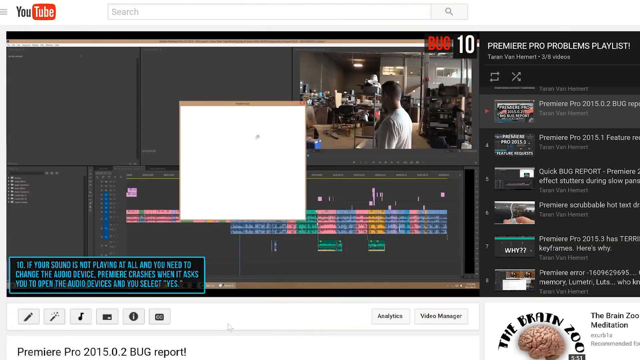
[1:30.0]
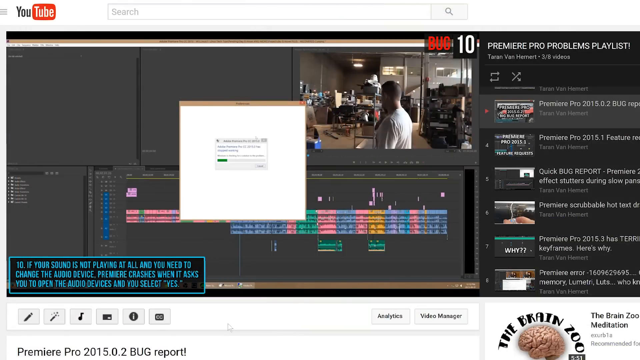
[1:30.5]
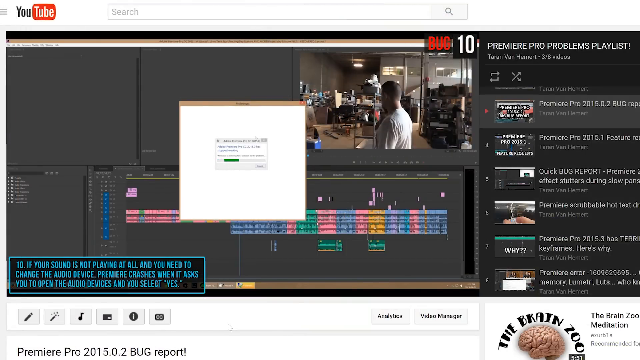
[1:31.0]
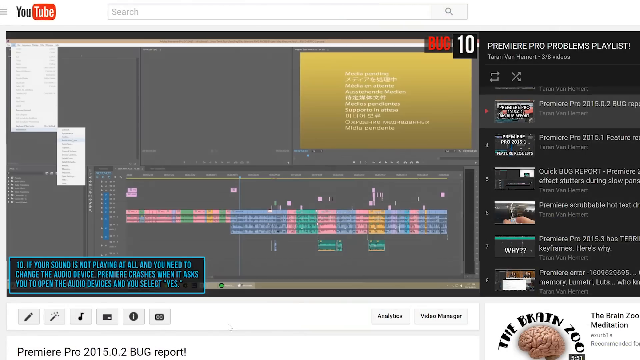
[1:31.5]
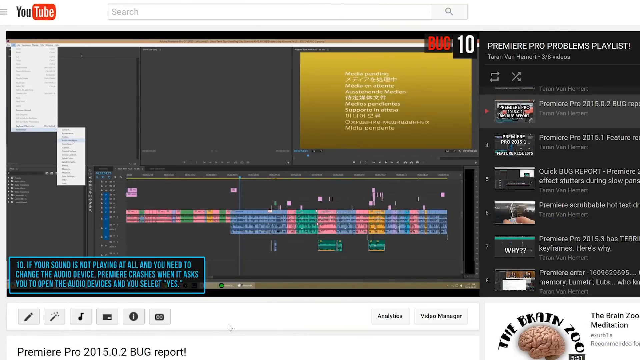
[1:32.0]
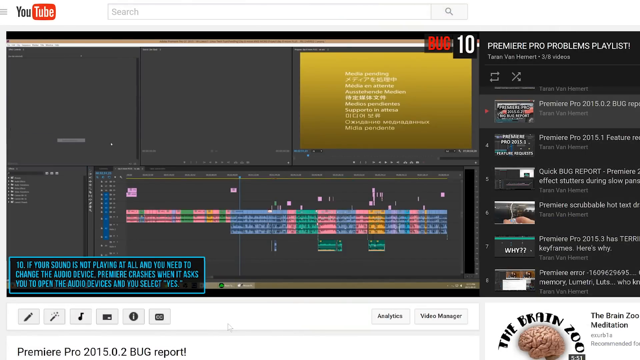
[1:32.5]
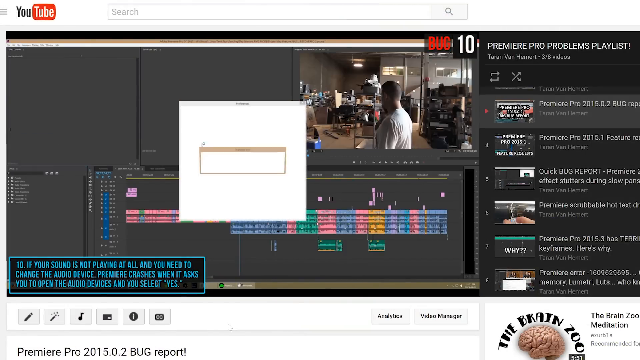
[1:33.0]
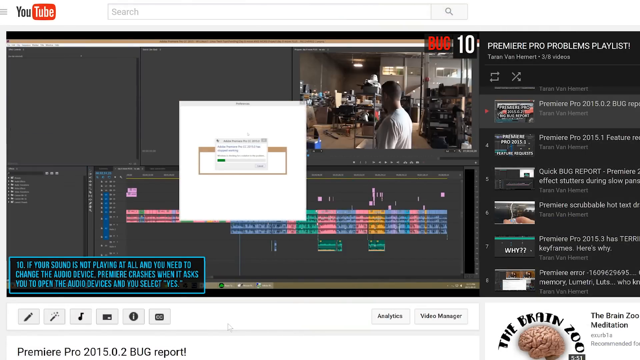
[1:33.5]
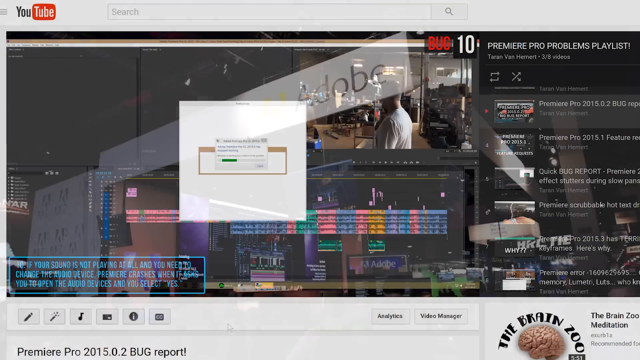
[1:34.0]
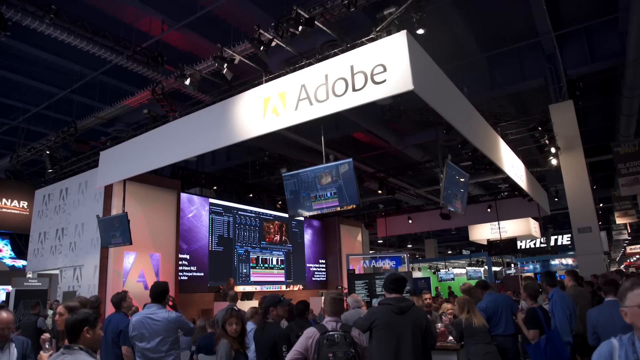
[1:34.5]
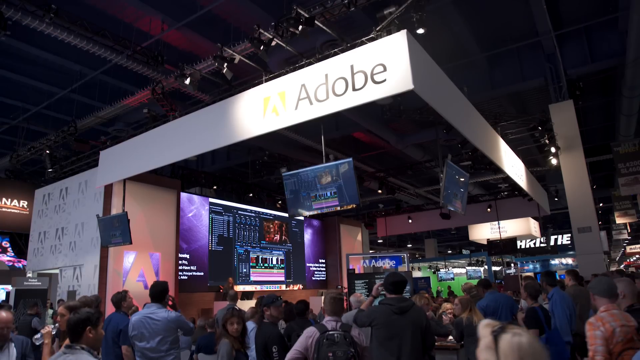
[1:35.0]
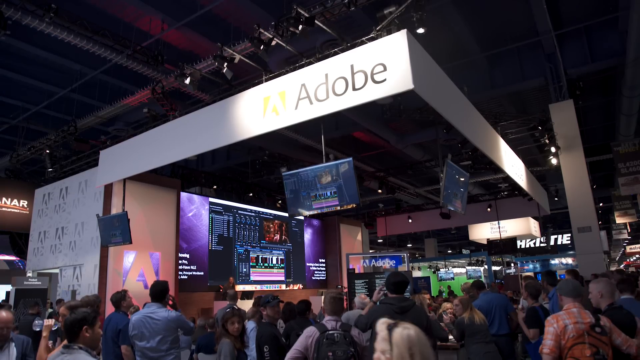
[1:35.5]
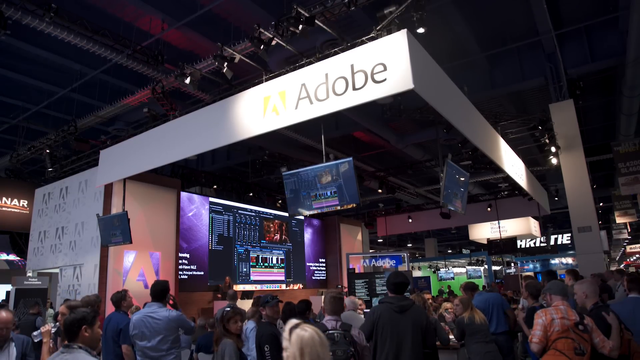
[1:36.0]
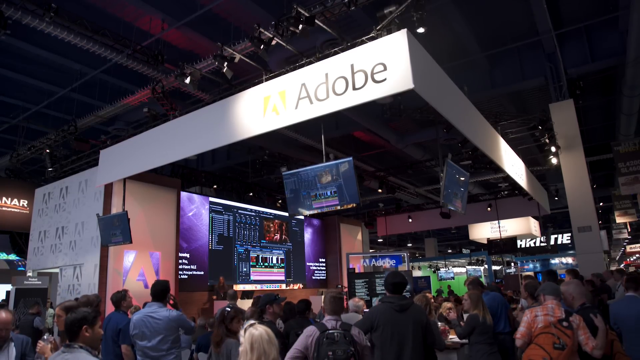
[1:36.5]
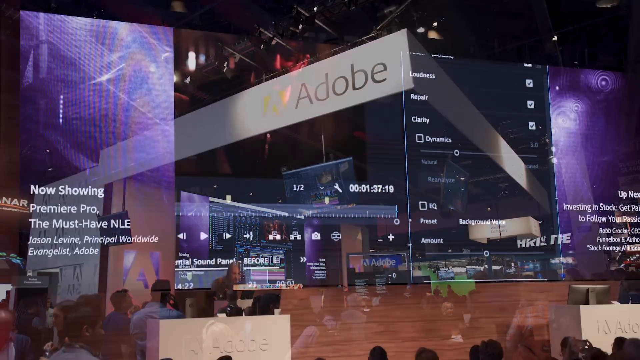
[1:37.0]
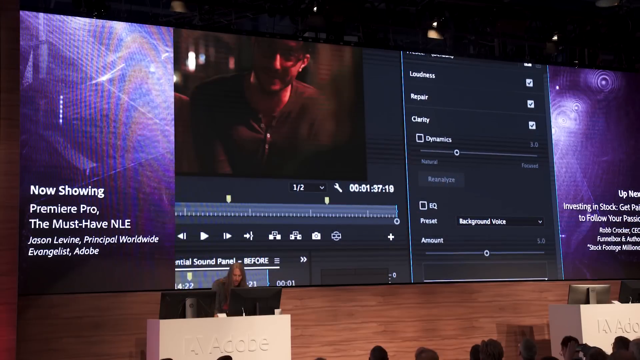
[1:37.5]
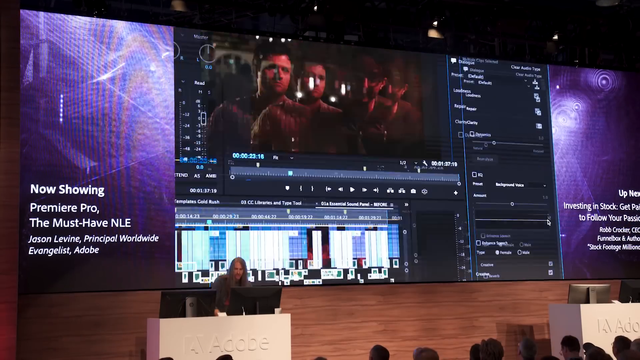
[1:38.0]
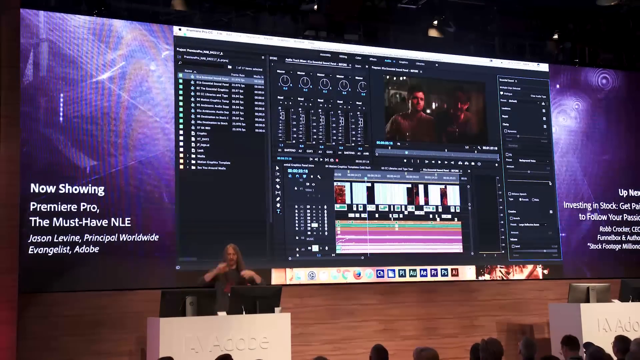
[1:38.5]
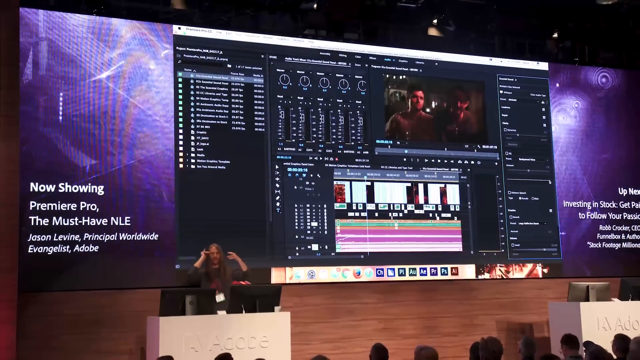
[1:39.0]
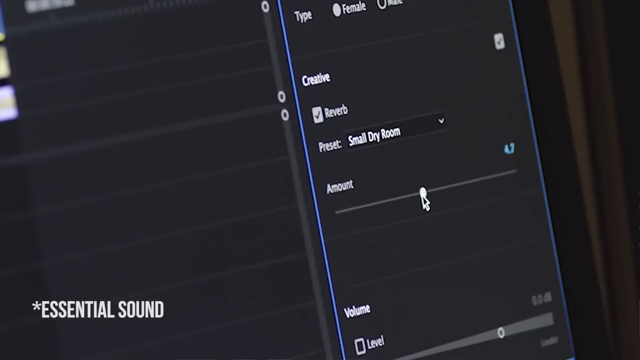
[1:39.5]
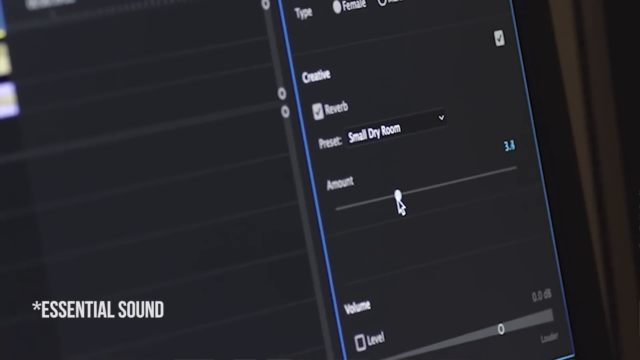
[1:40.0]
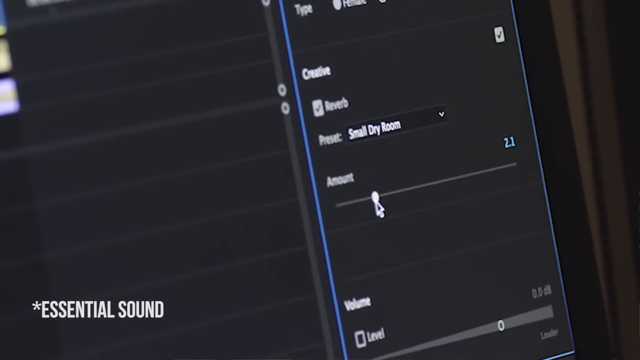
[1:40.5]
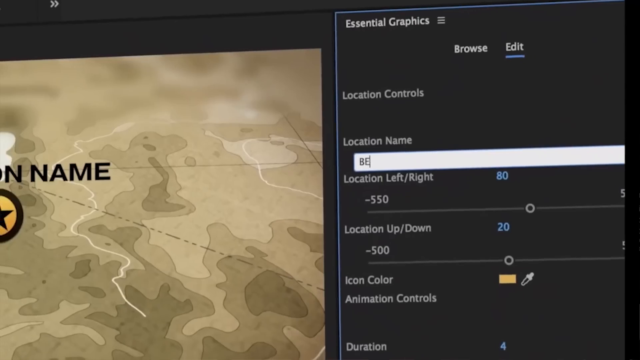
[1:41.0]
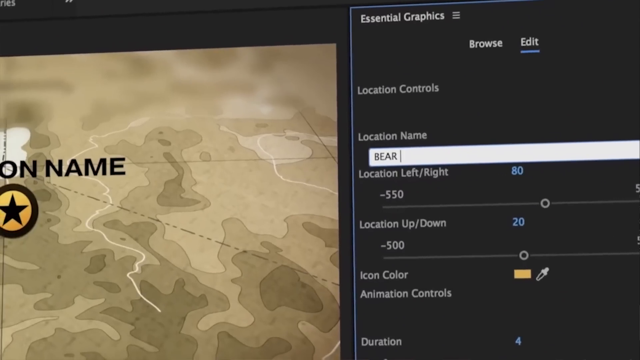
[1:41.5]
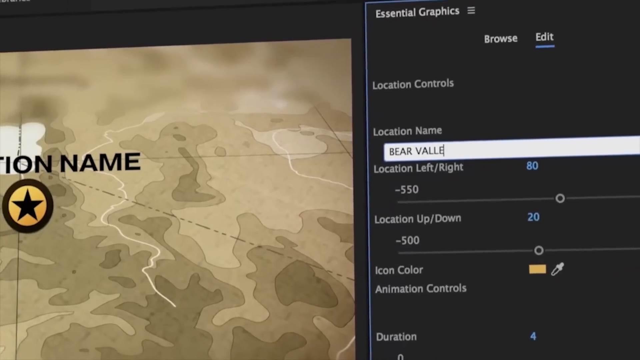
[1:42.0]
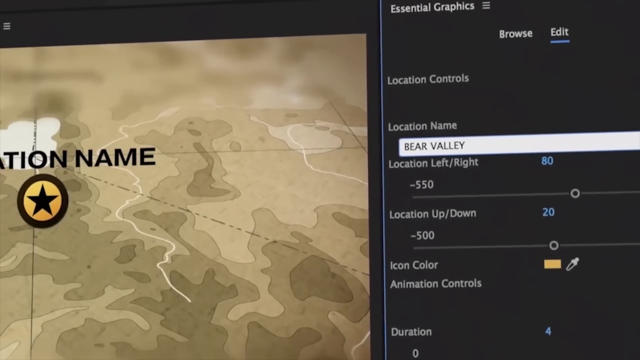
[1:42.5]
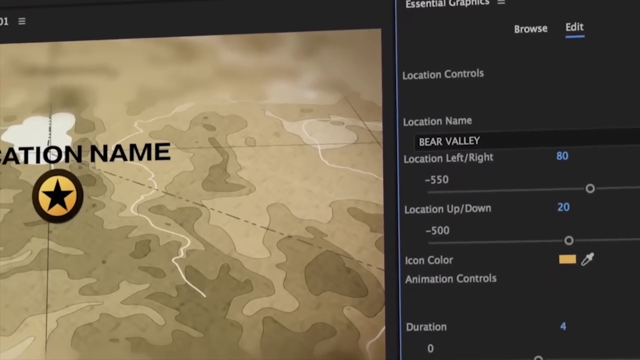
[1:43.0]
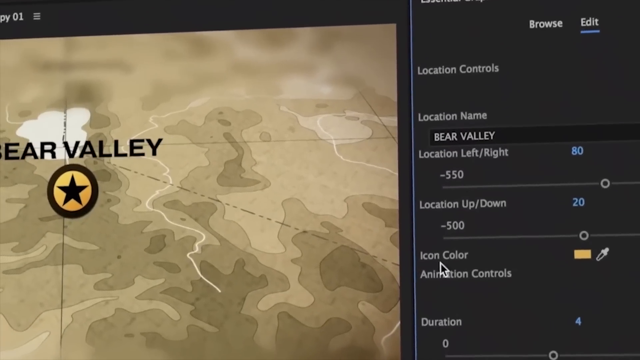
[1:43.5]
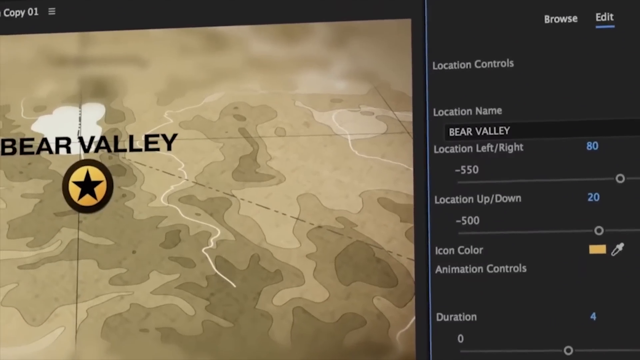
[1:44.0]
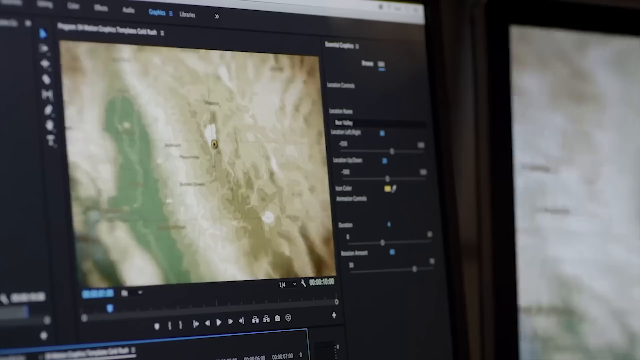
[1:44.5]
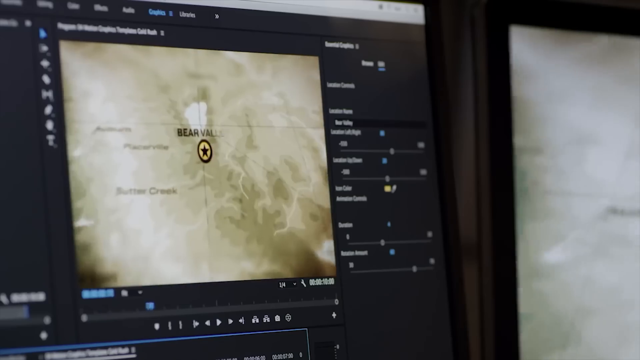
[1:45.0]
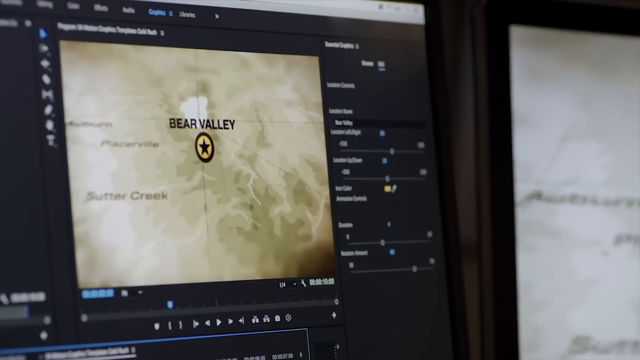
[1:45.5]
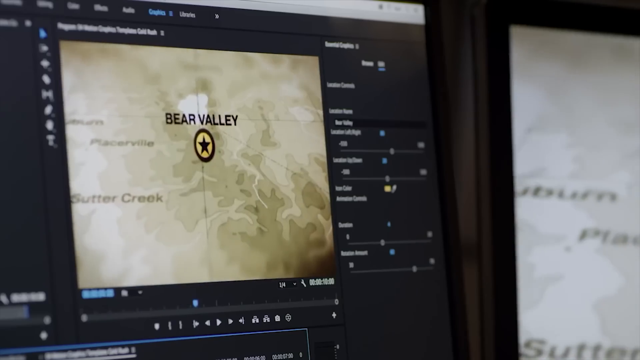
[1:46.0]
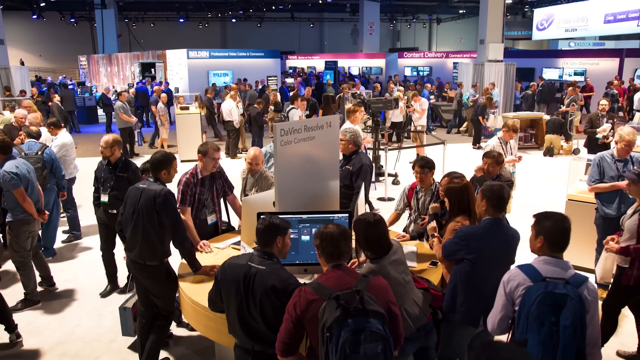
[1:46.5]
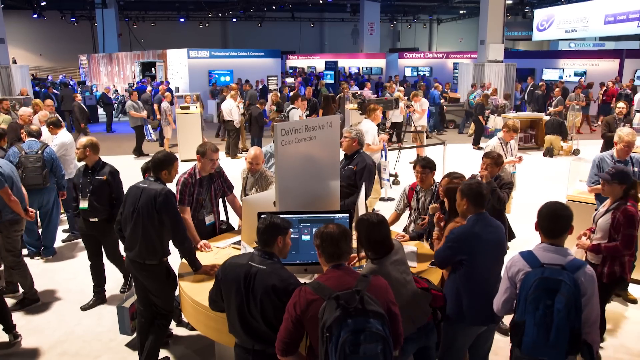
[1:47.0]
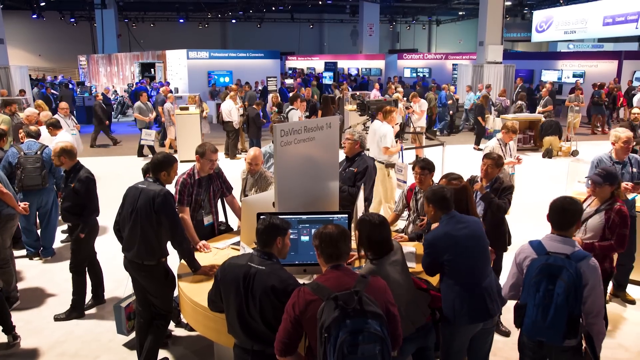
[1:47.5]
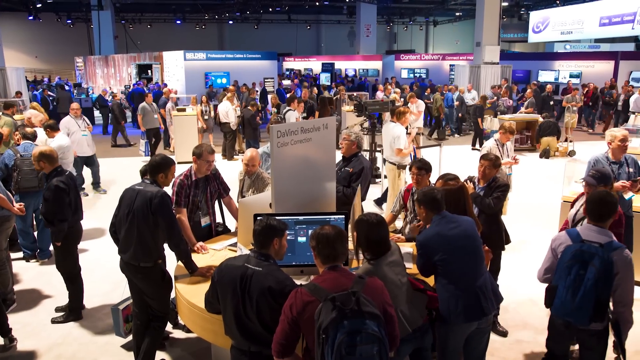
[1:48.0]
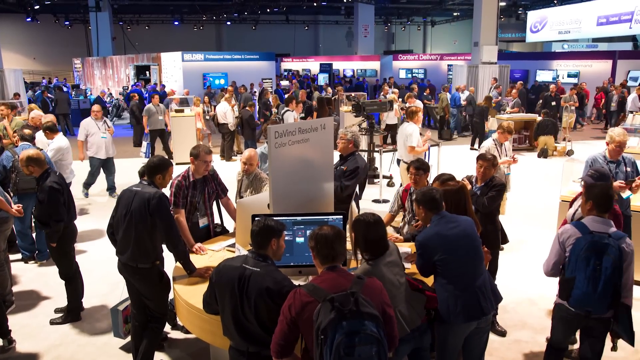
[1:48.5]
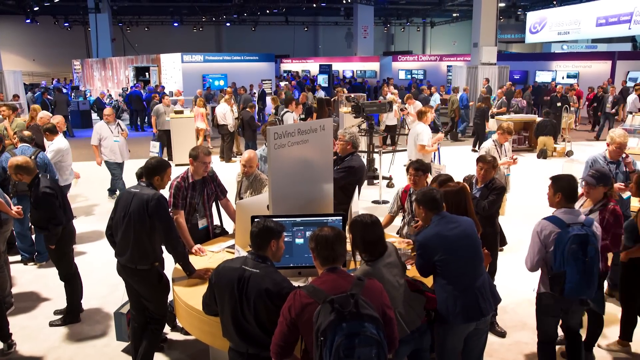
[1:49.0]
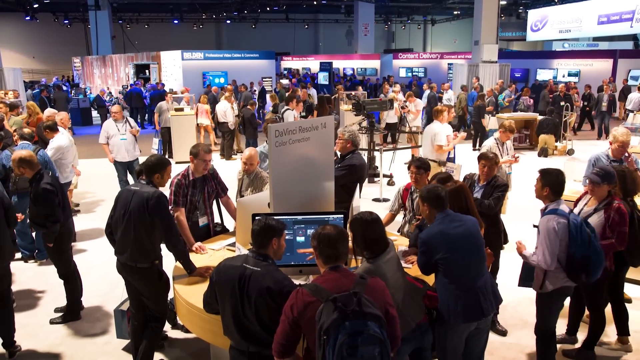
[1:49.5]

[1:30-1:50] People are gathered in the hall, and the video focuses on laptops. There are not enough laptops for everyone, but some people are sitting at tables with screens in front of them, which could be laptops. Sam seems to still be in the control room, controlling the screen and the sound. Others are walking around the hall. One of the featured software items is Elk, and another is Pear Valley.